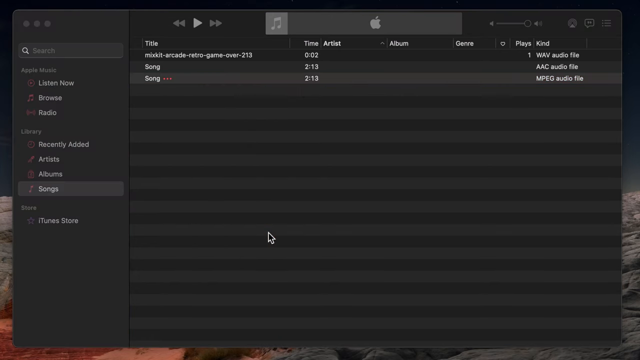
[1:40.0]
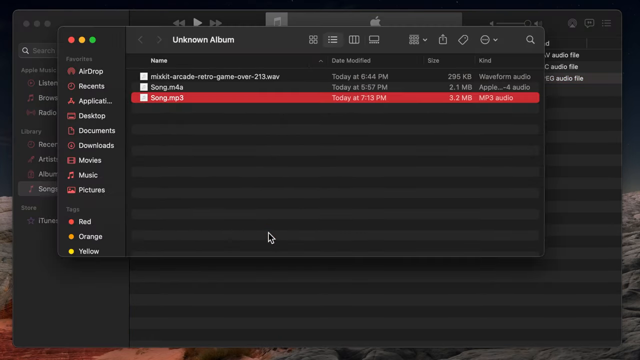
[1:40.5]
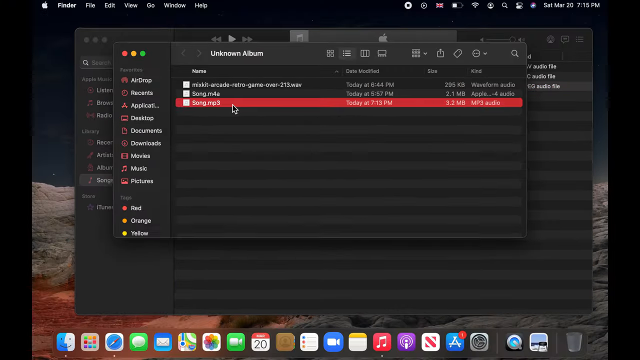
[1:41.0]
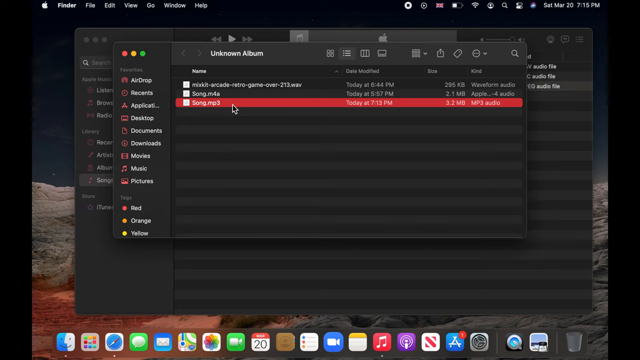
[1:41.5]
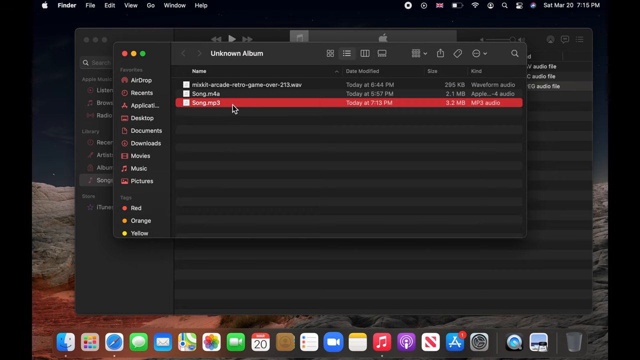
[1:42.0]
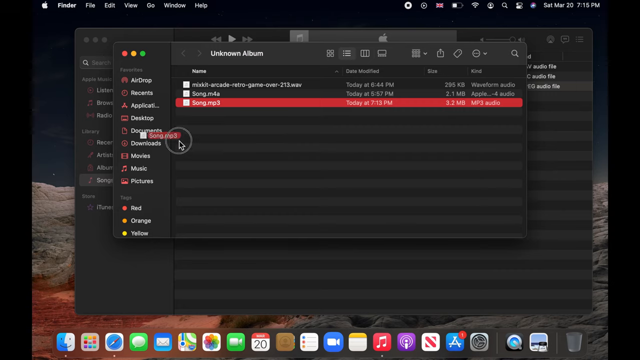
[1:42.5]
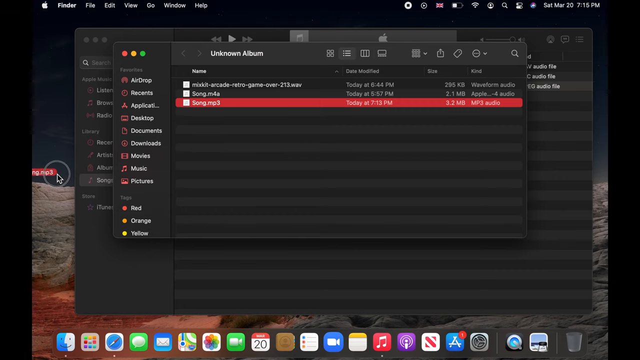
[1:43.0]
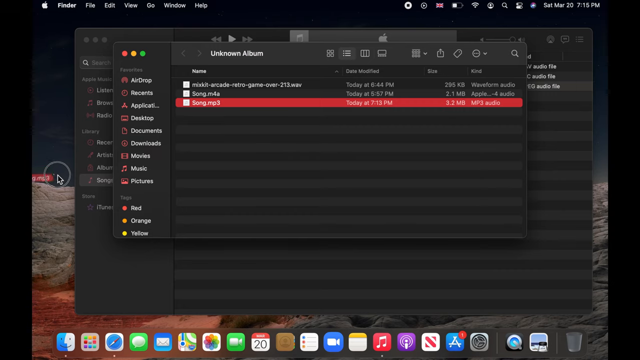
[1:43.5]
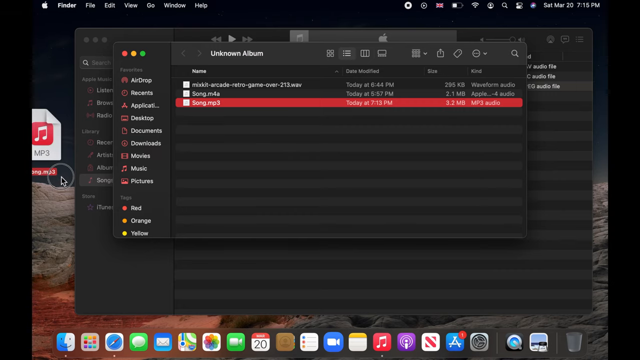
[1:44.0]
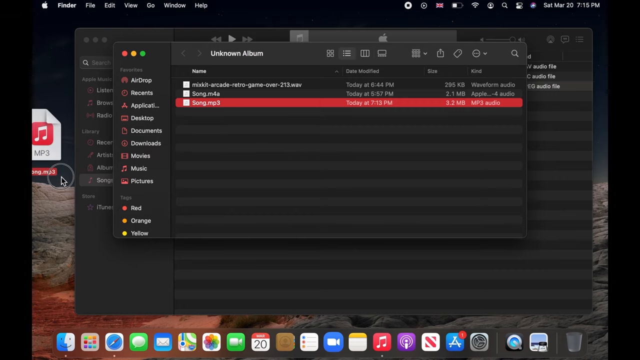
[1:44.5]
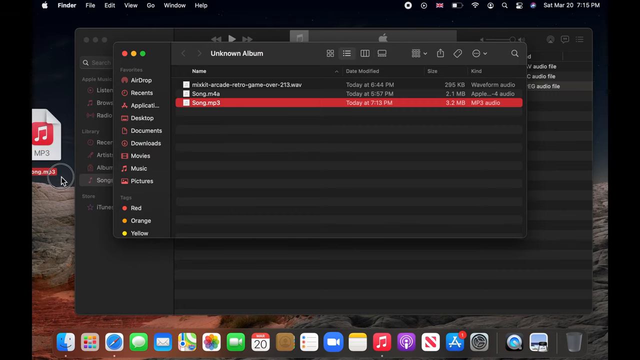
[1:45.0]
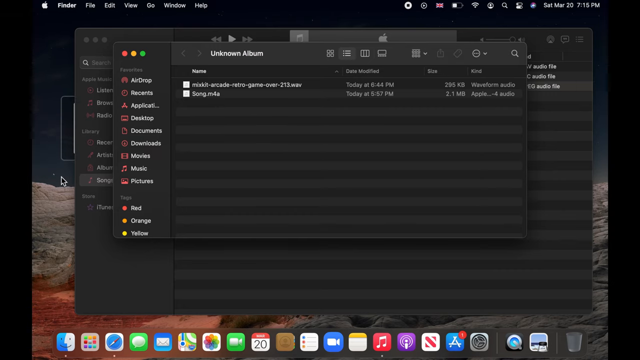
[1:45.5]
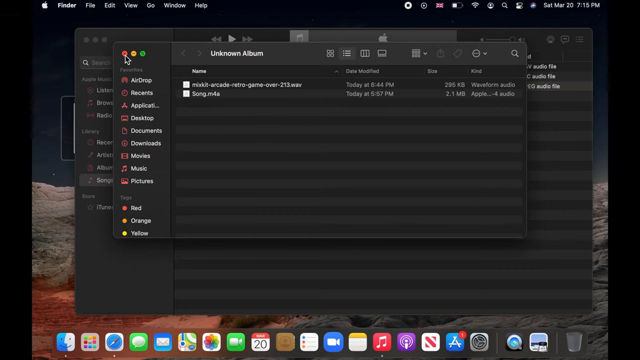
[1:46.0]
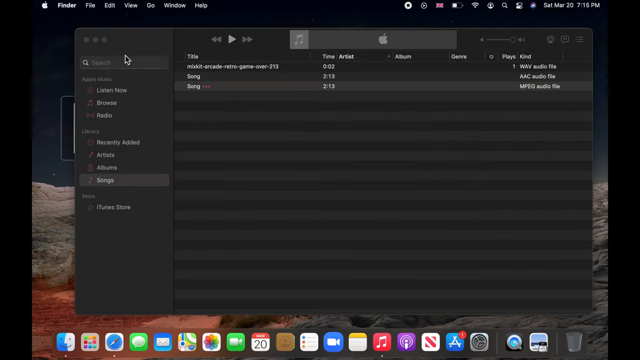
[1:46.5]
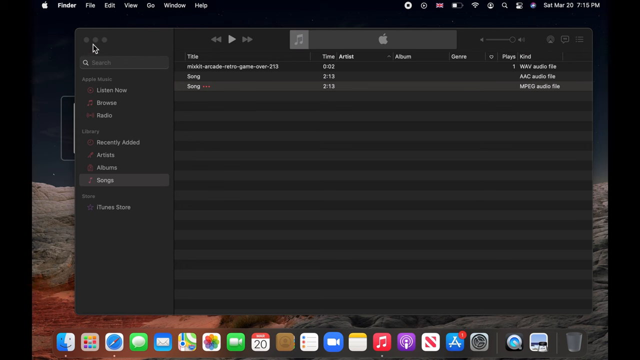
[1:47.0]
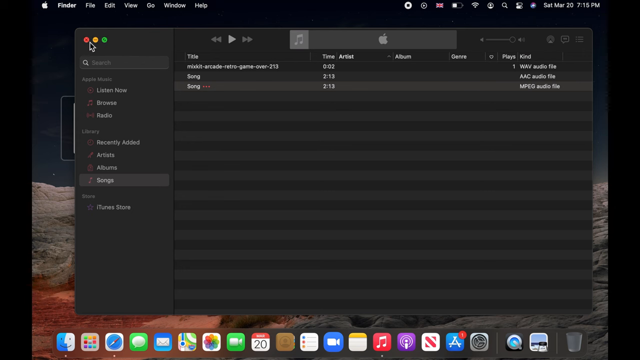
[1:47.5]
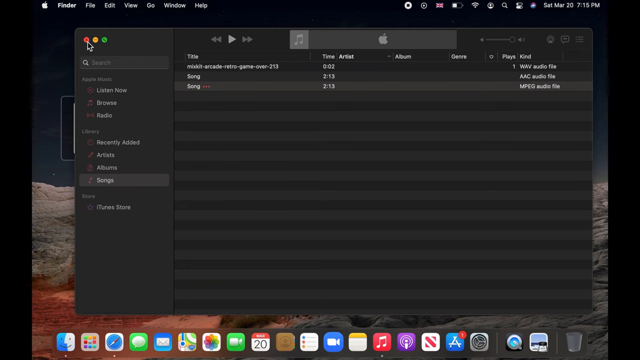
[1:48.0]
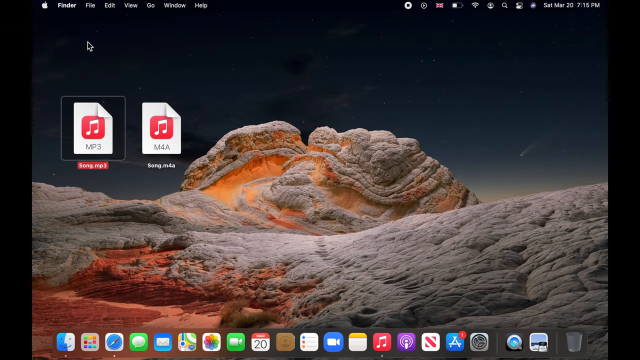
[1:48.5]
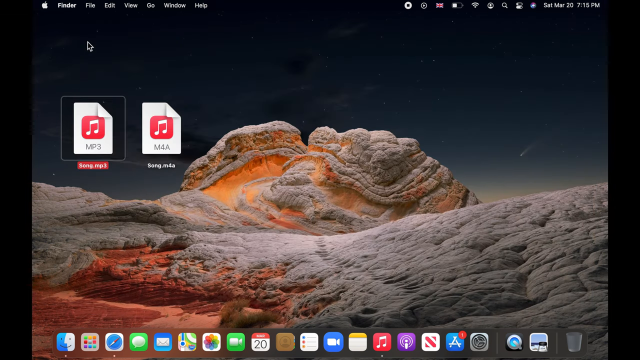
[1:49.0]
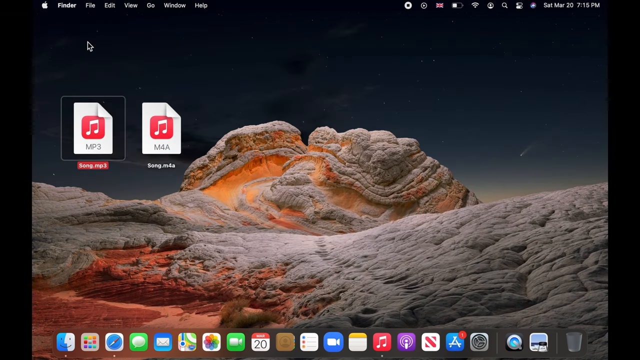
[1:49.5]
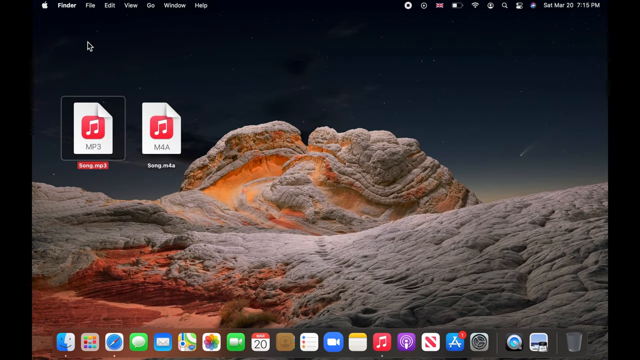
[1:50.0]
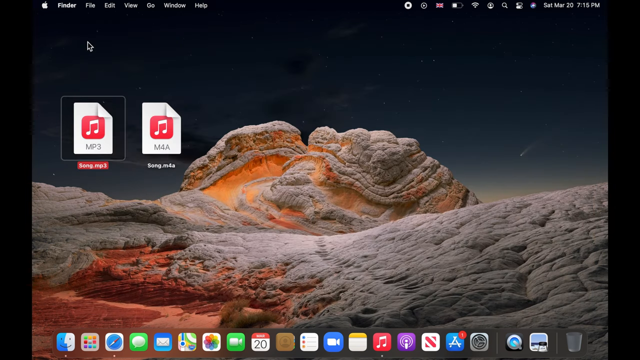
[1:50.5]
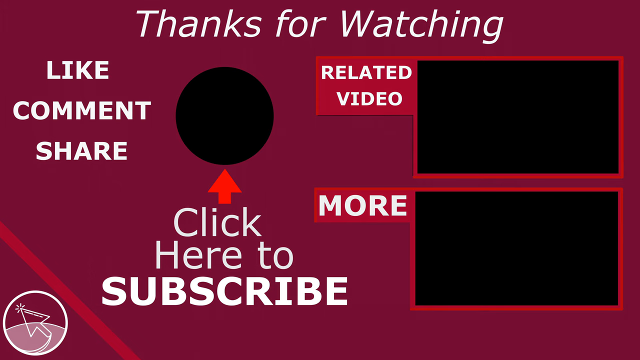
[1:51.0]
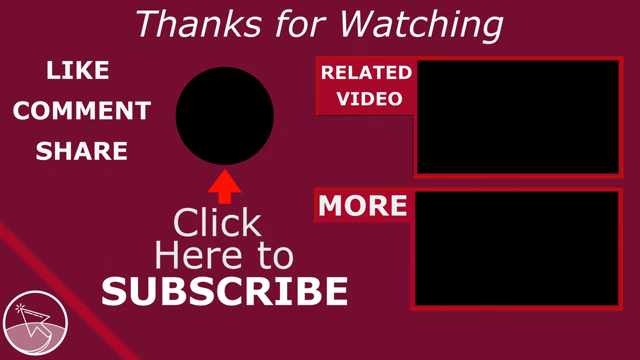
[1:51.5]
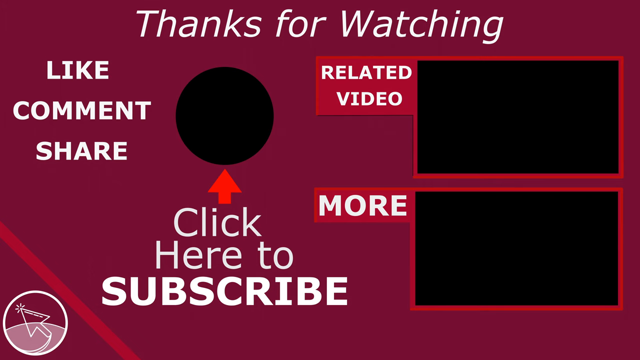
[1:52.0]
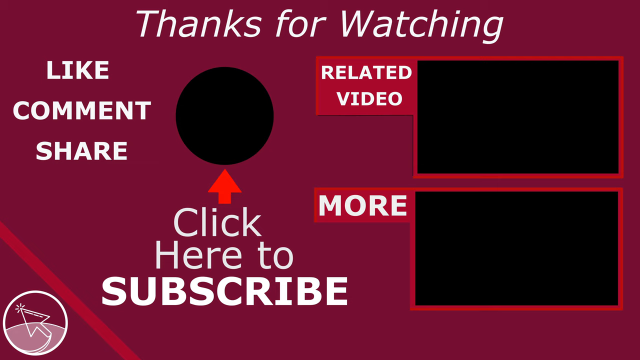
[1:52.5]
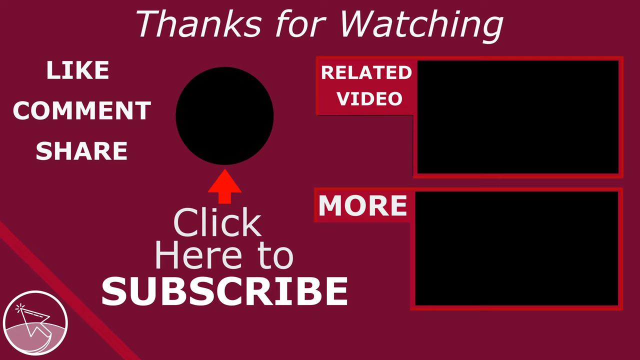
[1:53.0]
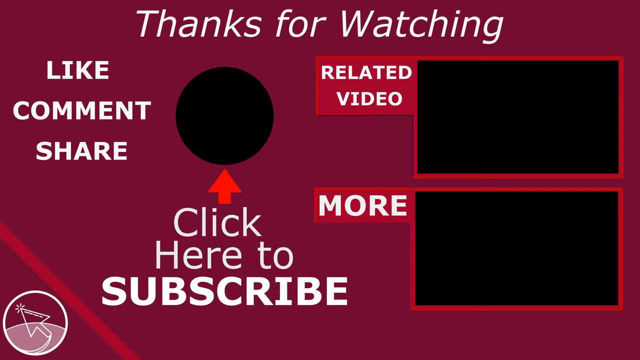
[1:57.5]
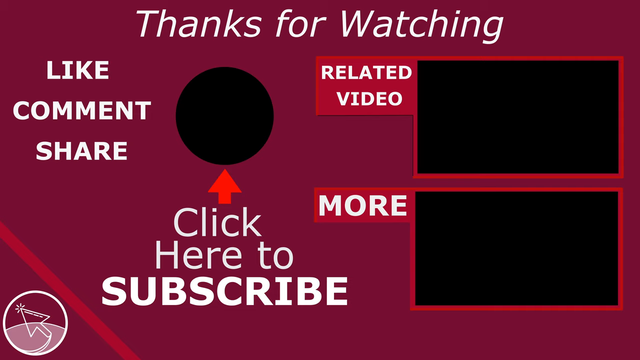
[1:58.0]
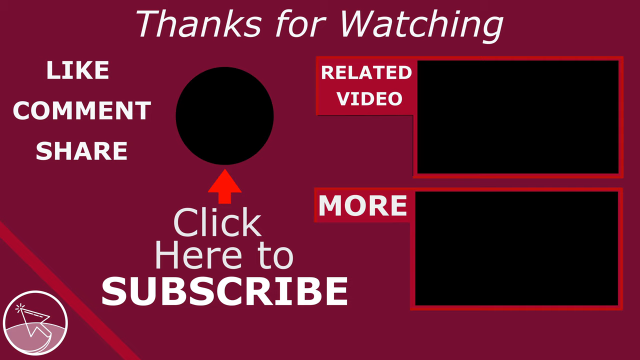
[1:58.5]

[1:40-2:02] A Finder window opens showing the location of the newly created file, the same song in mp3 format. The user drags it onto the desktop next to the original. The video then abruptly ends and an outro appears that says "Thanks for watching, like, comment, share." There is a black circle that says "click here to subscribe," possibly a placeholder for the channel's profile photo, and on the right are two black rectangular placeholders, one saying "Related Video" and another saying "More." The song, originally an AAC file, has been converted to an mp3 file.